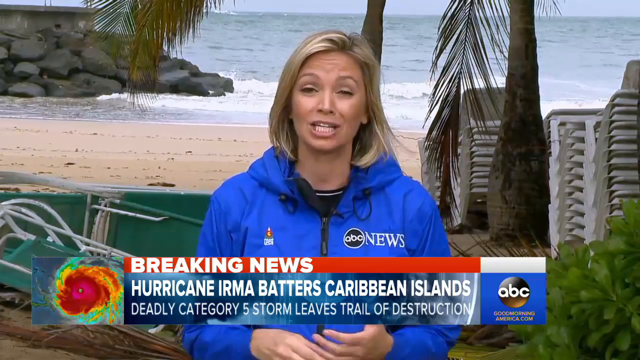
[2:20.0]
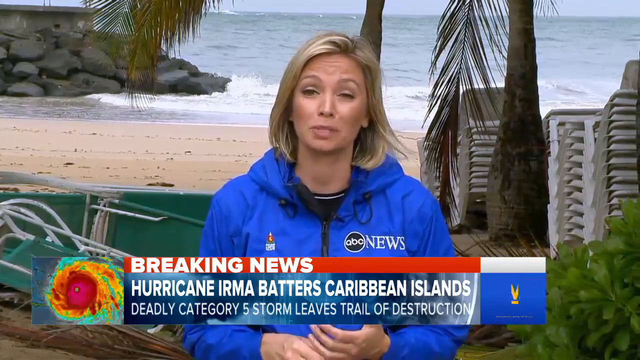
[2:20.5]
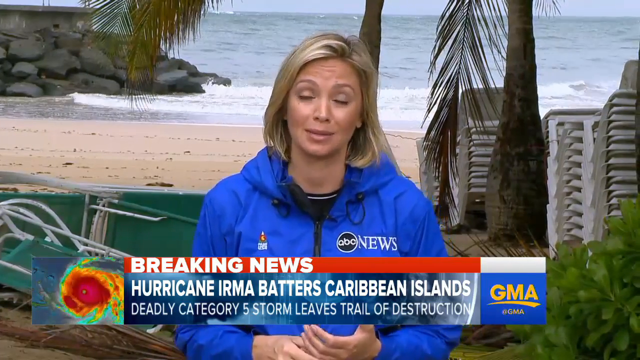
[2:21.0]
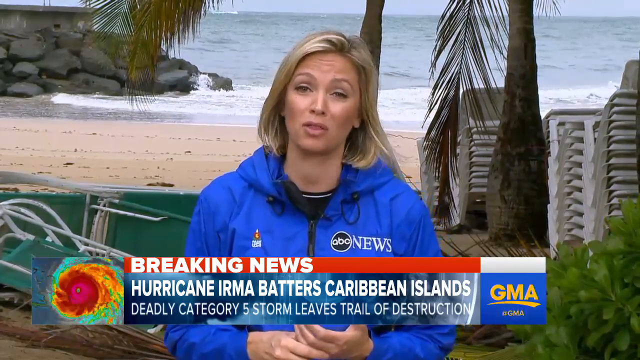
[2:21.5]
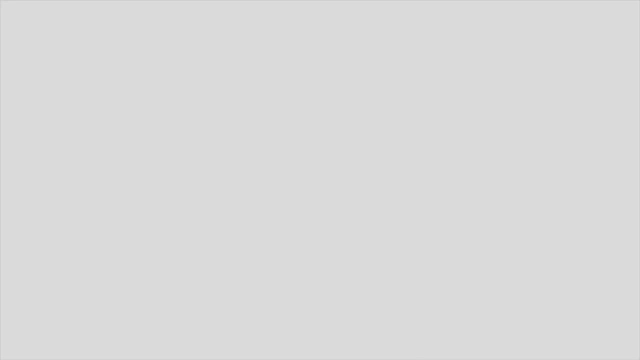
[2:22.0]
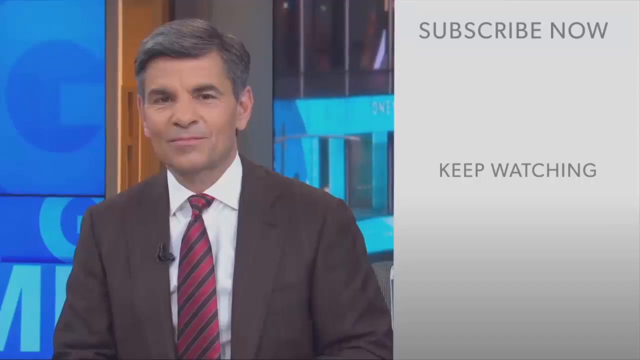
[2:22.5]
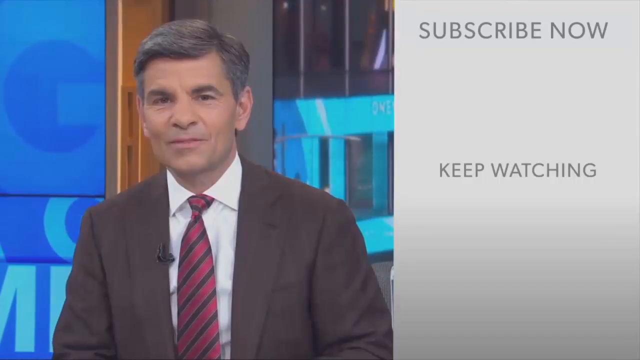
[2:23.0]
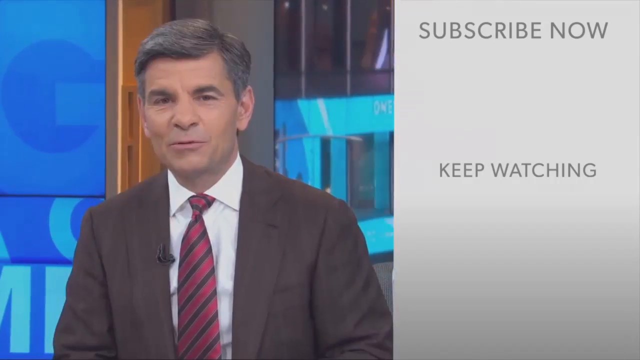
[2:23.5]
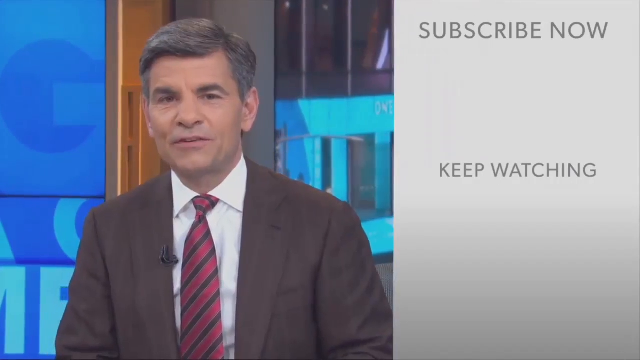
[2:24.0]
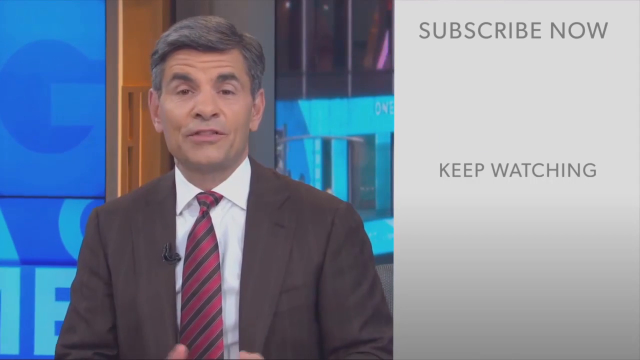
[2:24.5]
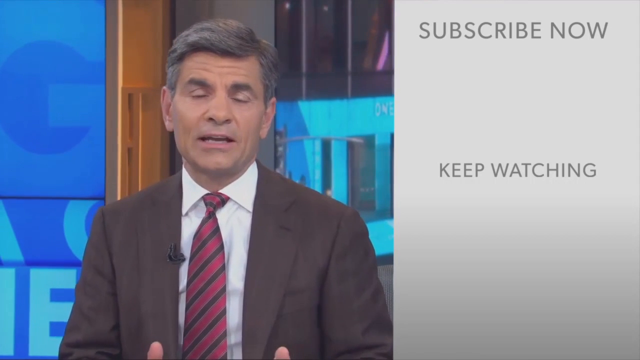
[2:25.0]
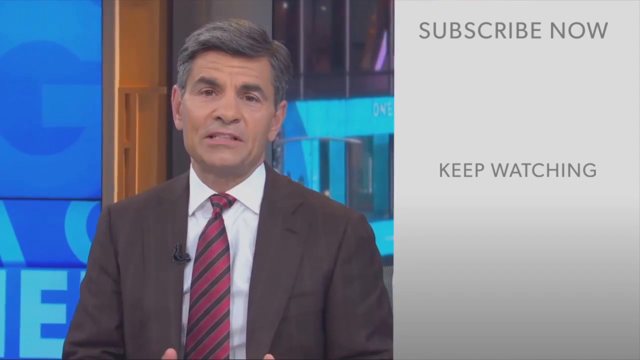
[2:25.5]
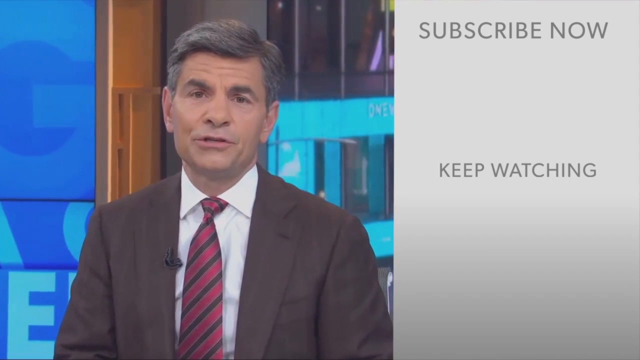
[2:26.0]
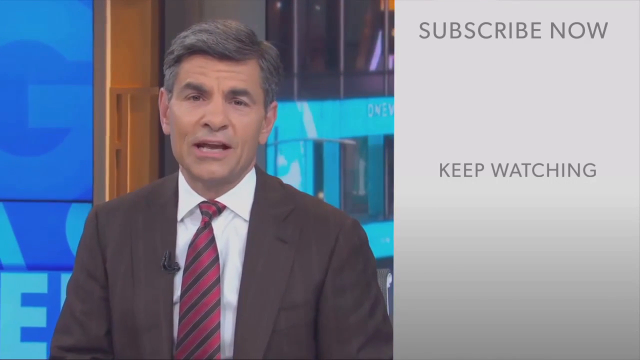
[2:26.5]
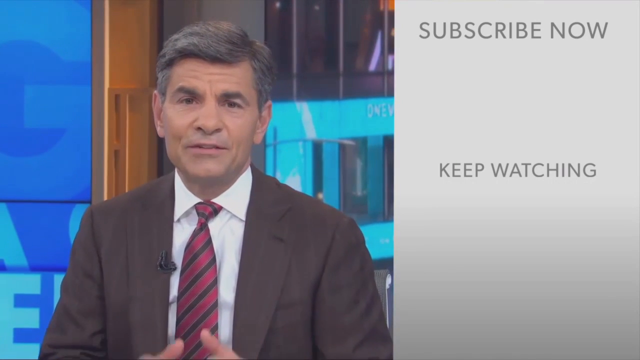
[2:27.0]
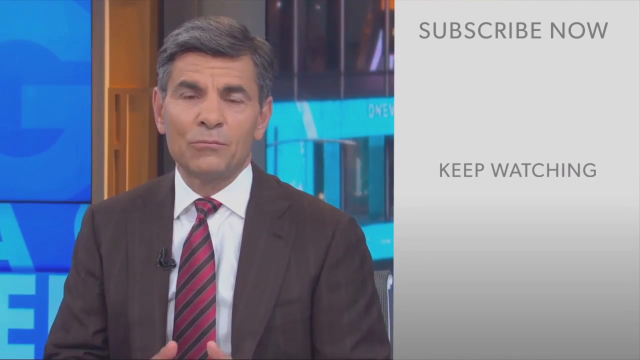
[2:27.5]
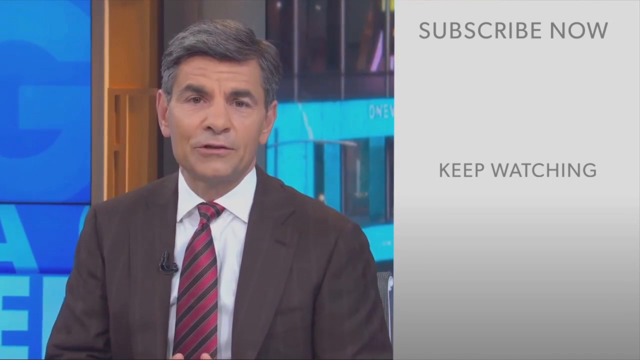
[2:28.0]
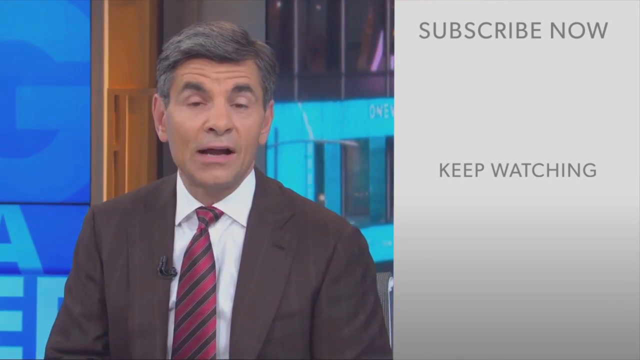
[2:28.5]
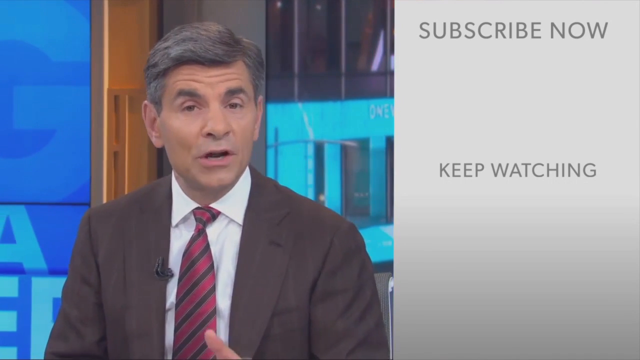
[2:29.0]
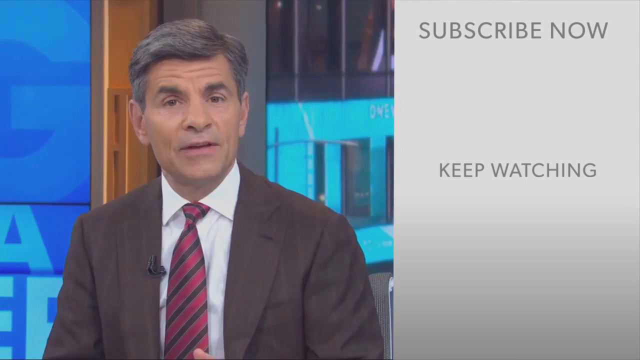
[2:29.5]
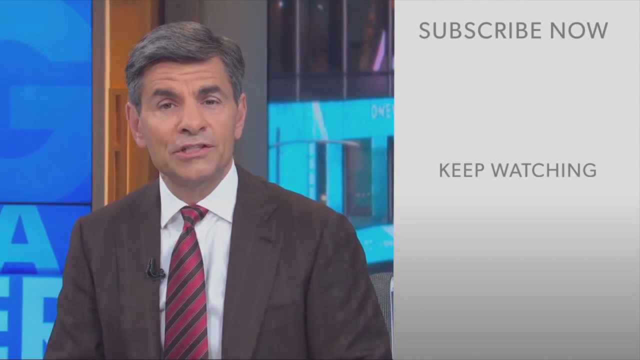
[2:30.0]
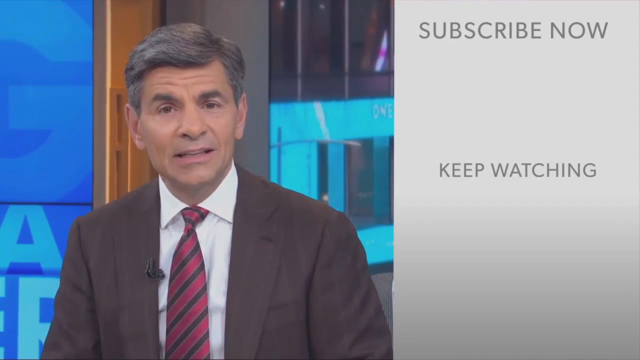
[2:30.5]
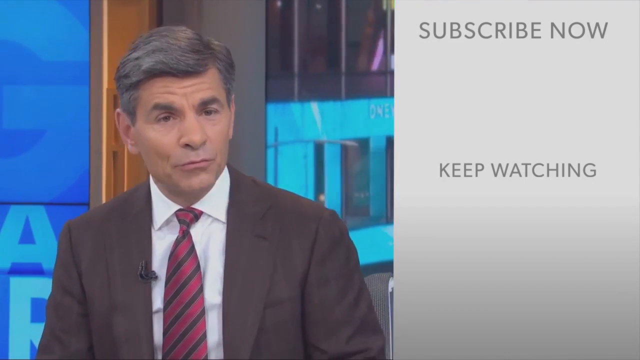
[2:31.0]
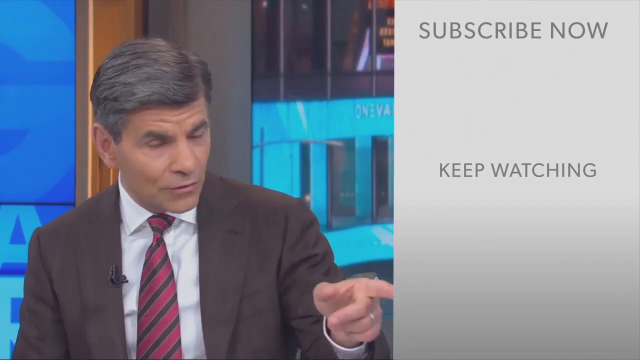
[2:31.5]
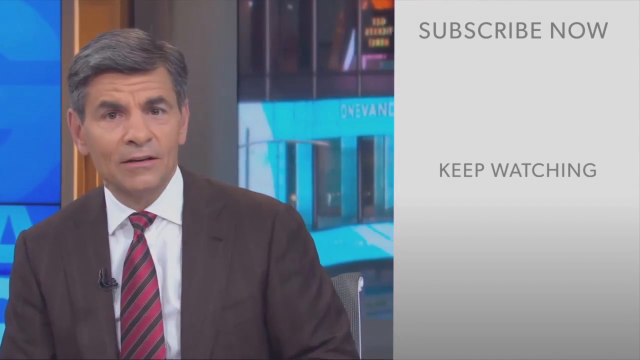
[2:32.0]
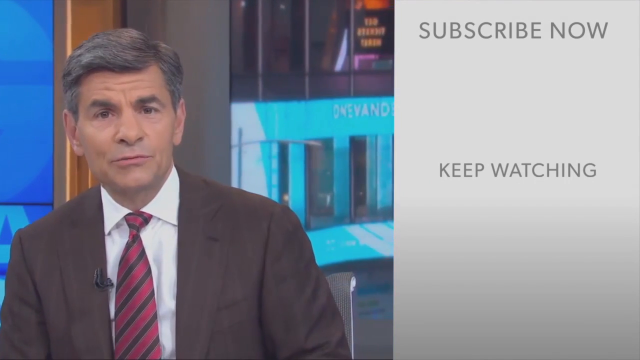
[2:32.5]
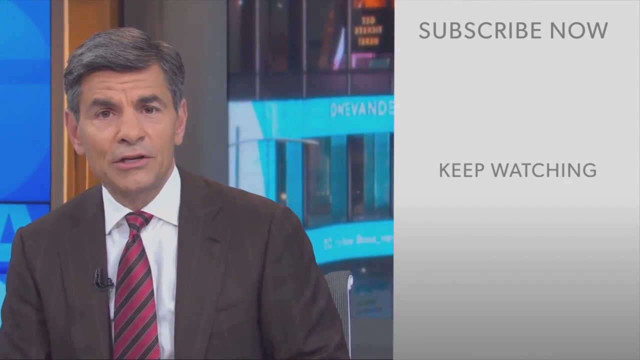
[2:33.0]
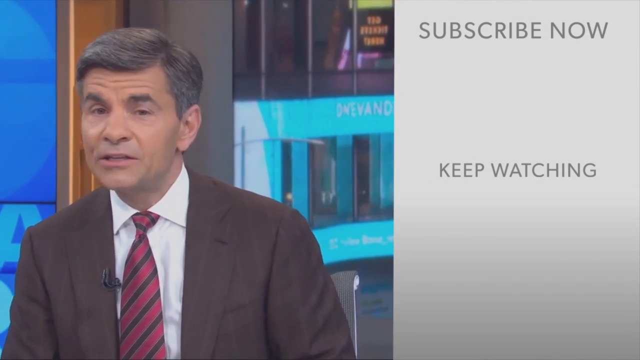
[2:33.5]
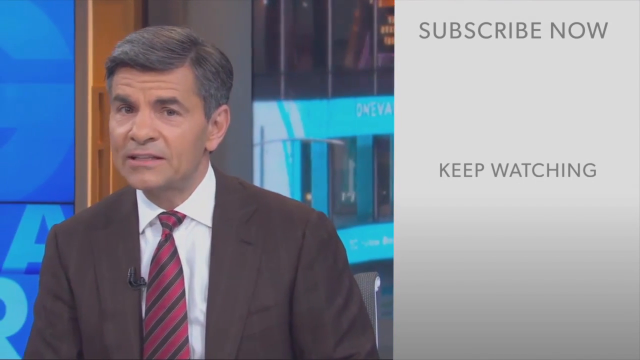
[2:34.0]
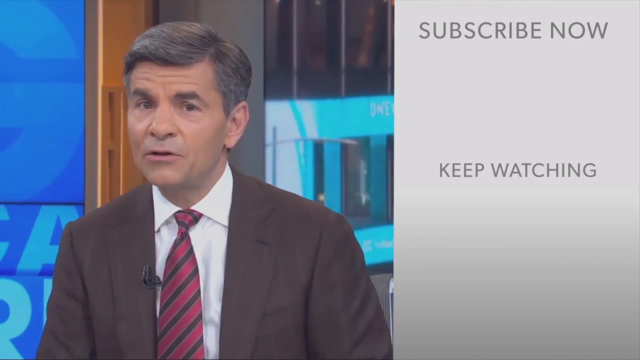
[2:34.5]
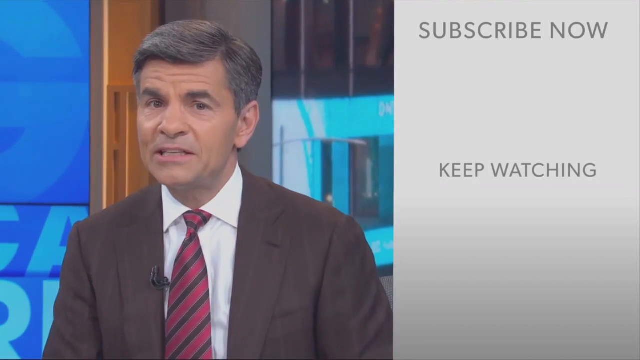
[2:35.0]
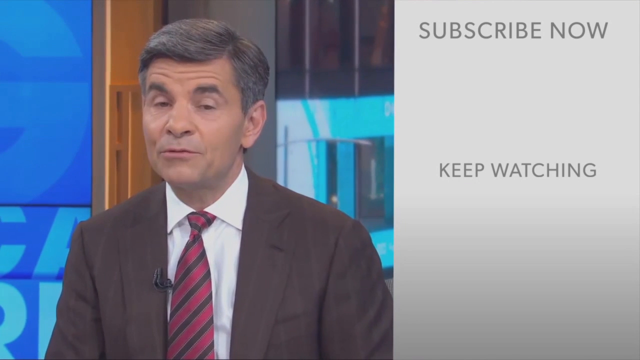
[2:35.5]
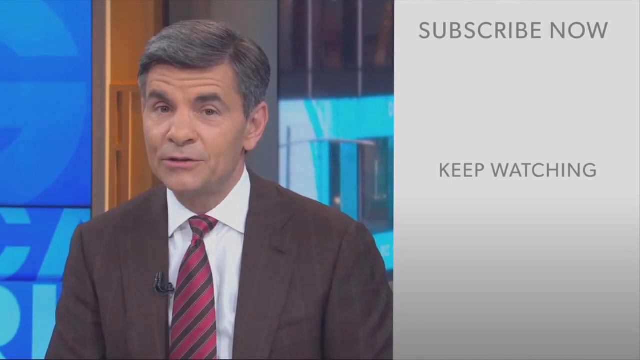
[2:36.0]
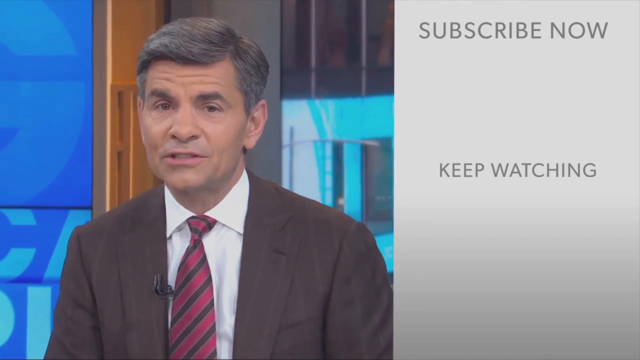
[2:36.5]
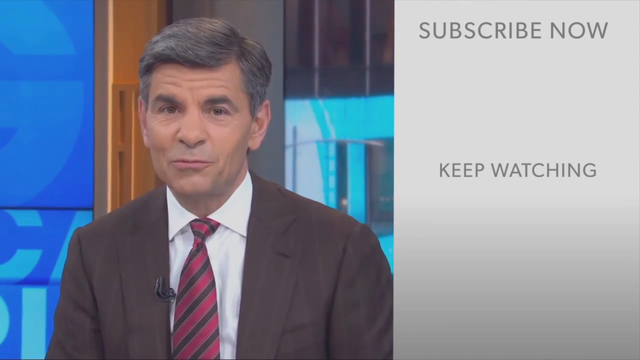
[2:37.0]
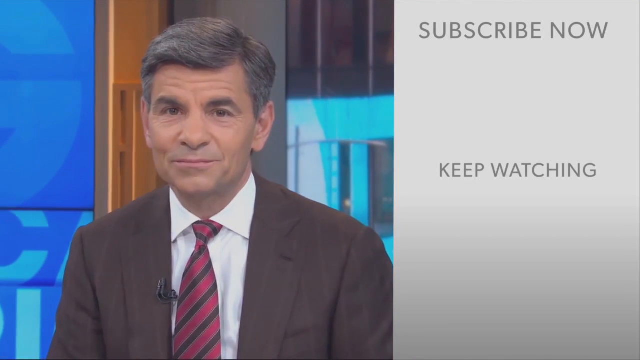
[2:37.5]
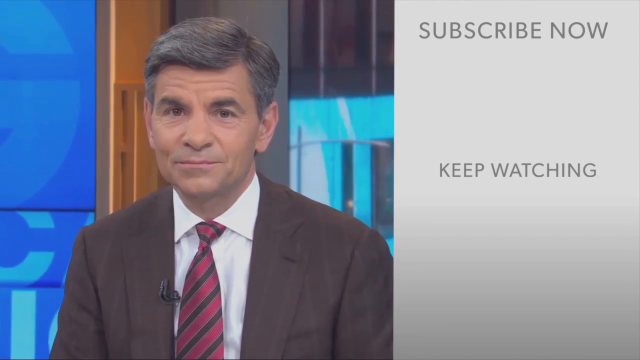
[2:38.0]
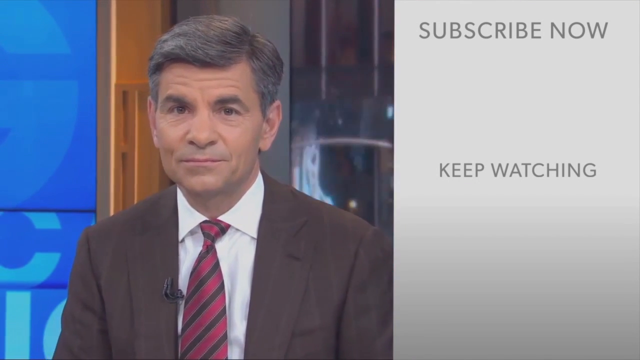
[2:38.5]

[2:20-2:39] A male newscaster from ABC News, wearing a brown jacket, a white shirt and a striped tie, speaks in the newsroom, going back and forth with a woman on location where there has been a storm. She wears a bright blue jacket and is standing on the ocean. In the newsroom, portions of a bright blue screen with light blue writing are visible. Her footage shows an ocean view with beach sand and water, with some chairs and some chaise-like lounges sitting in front.